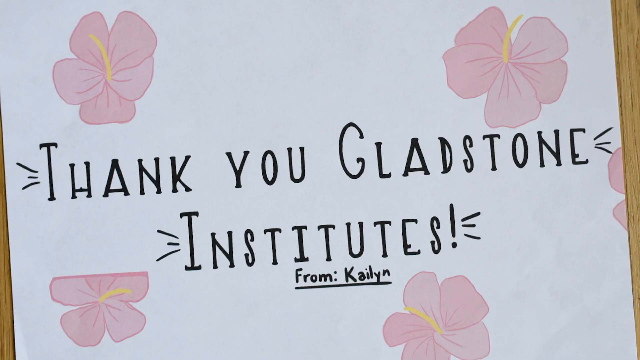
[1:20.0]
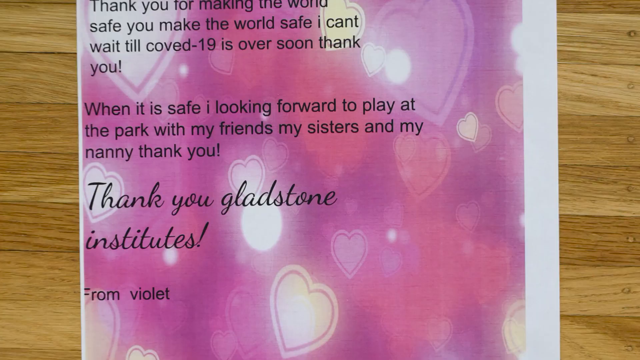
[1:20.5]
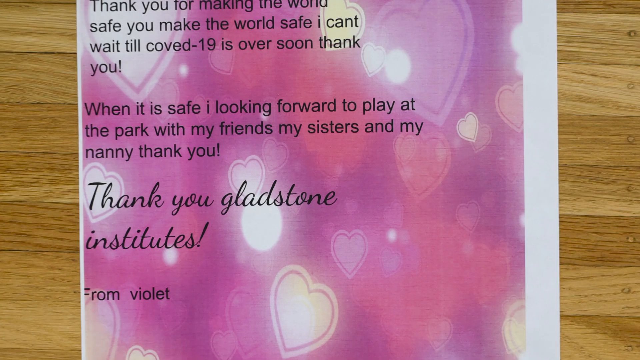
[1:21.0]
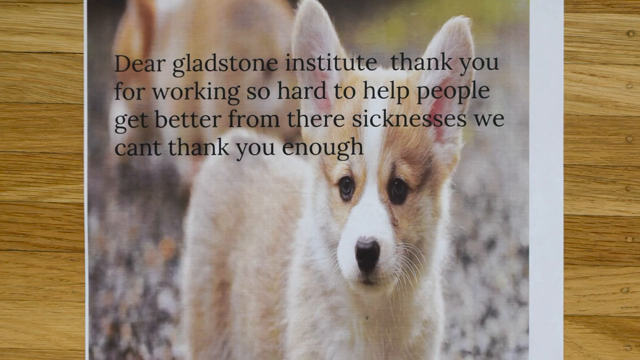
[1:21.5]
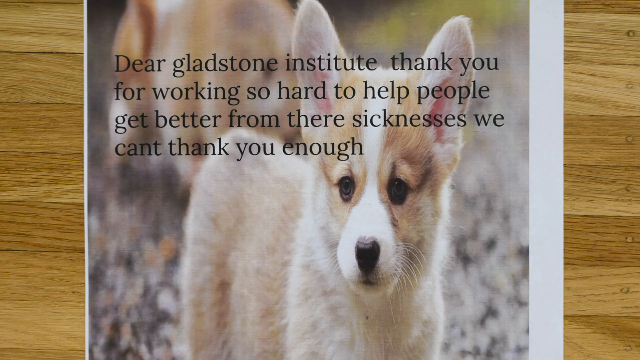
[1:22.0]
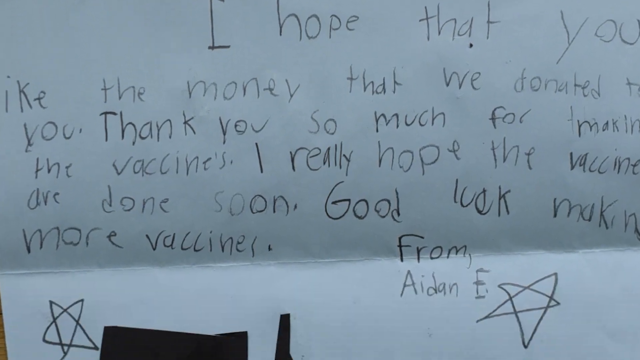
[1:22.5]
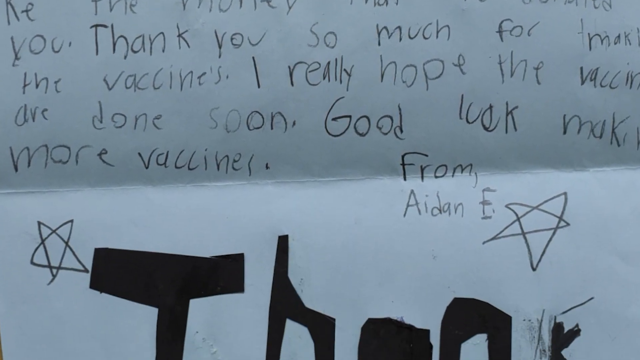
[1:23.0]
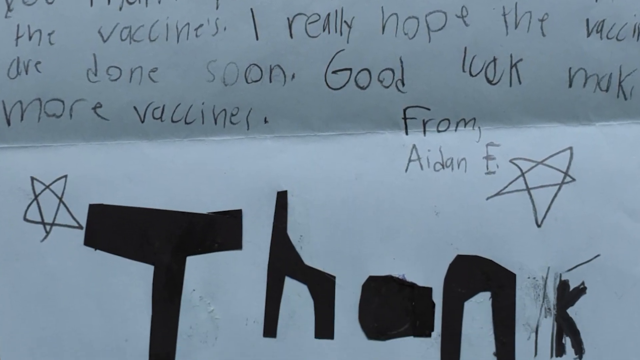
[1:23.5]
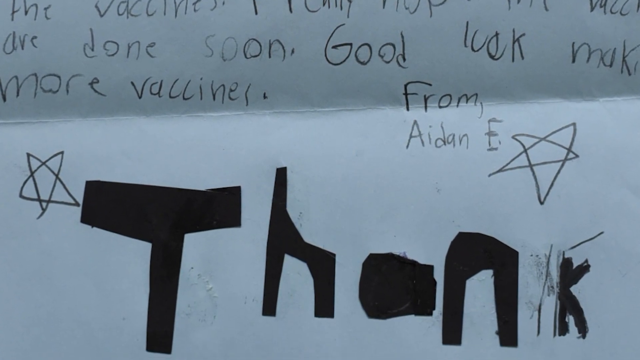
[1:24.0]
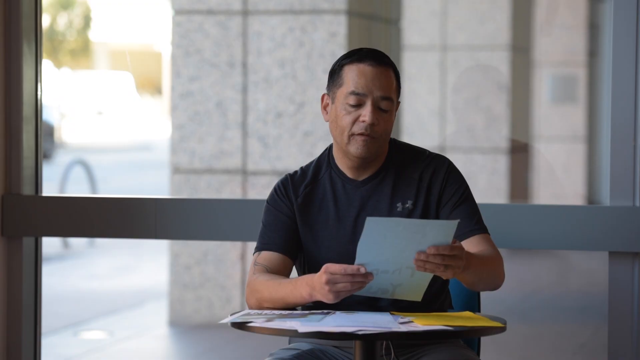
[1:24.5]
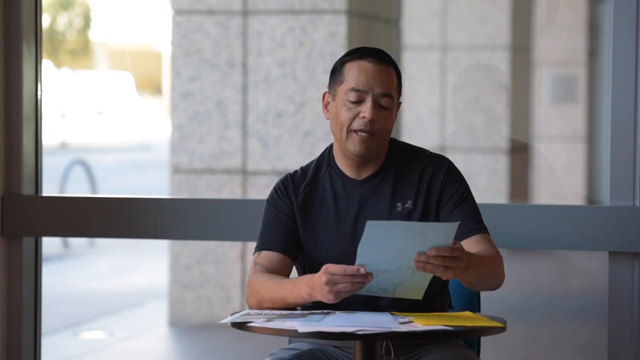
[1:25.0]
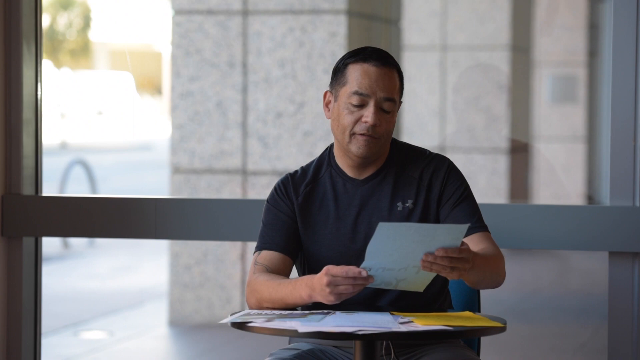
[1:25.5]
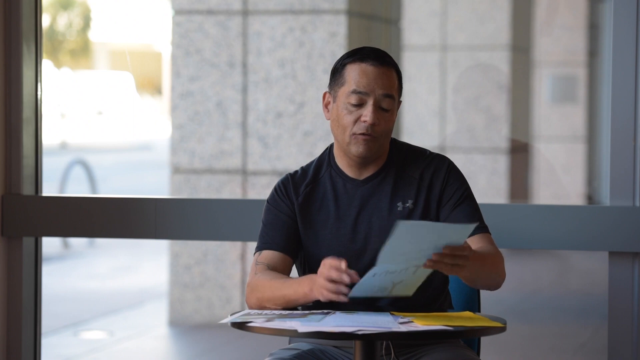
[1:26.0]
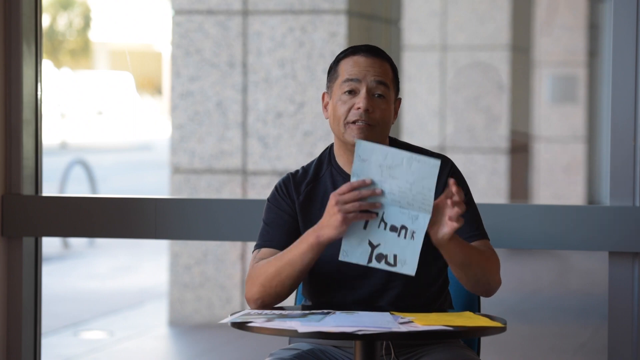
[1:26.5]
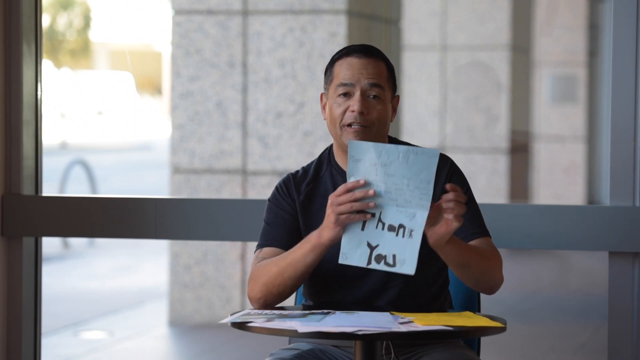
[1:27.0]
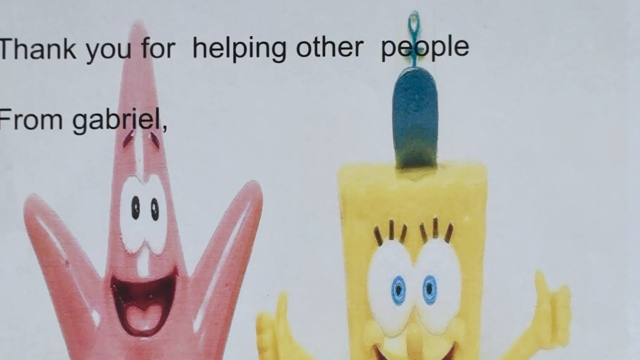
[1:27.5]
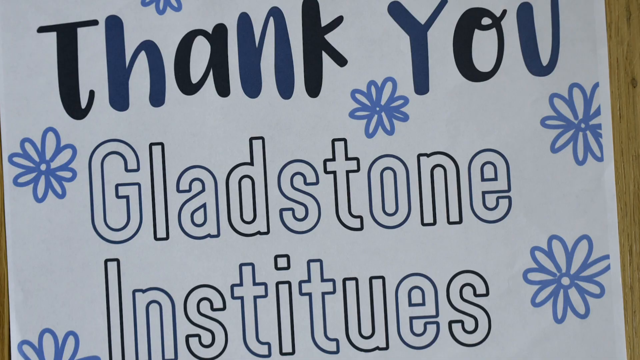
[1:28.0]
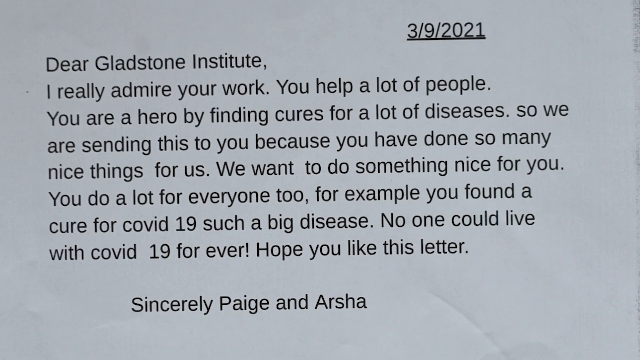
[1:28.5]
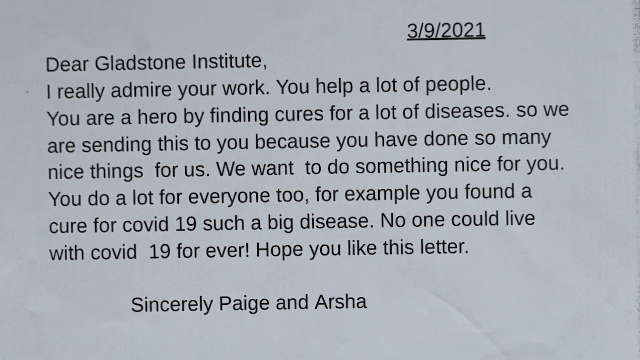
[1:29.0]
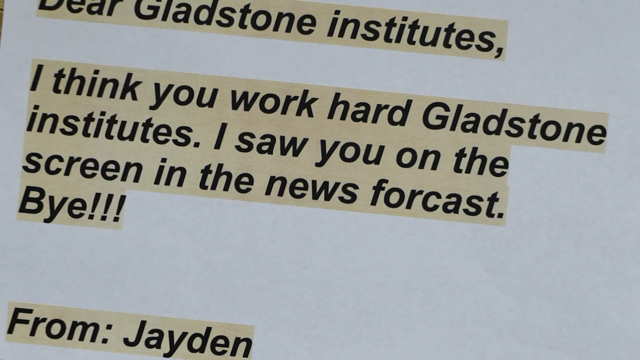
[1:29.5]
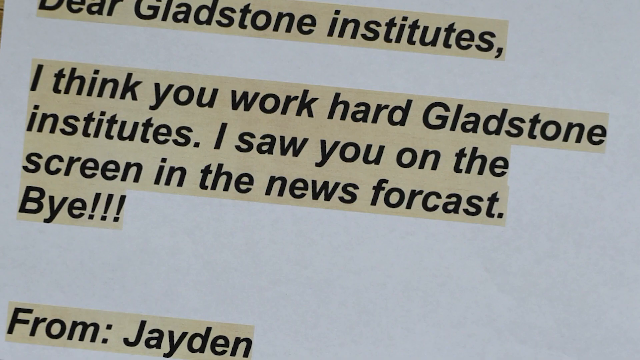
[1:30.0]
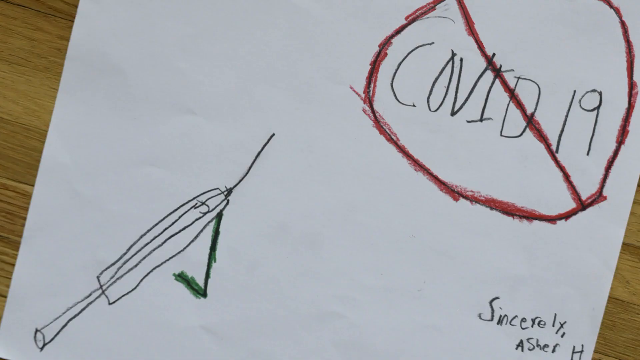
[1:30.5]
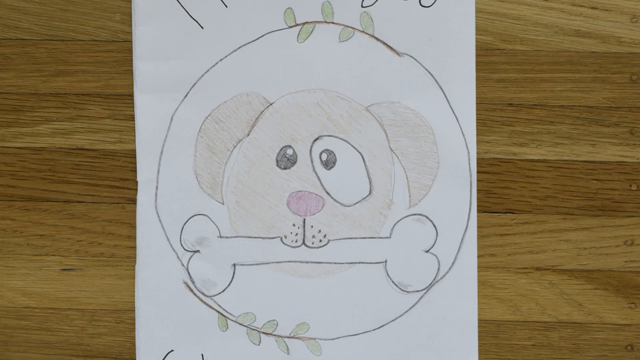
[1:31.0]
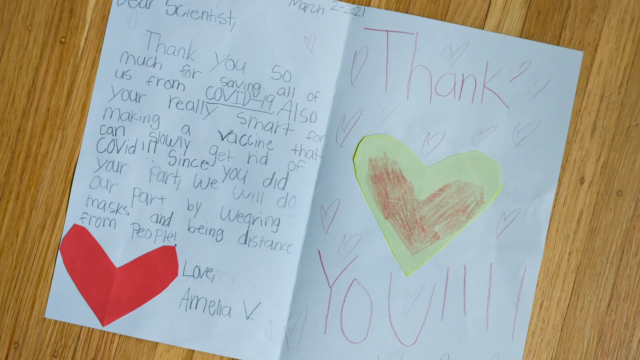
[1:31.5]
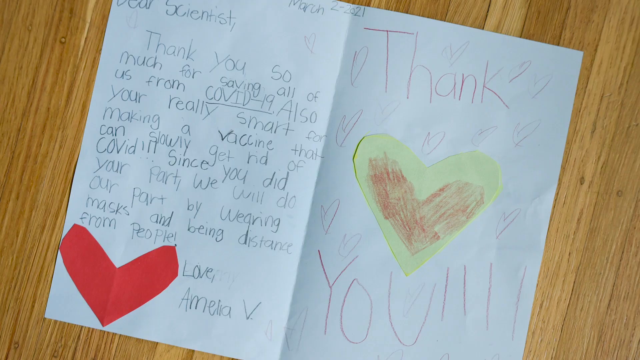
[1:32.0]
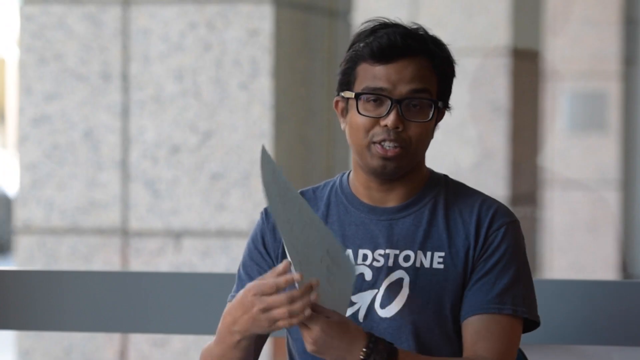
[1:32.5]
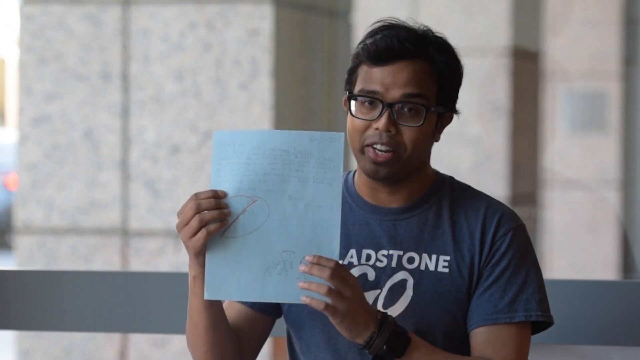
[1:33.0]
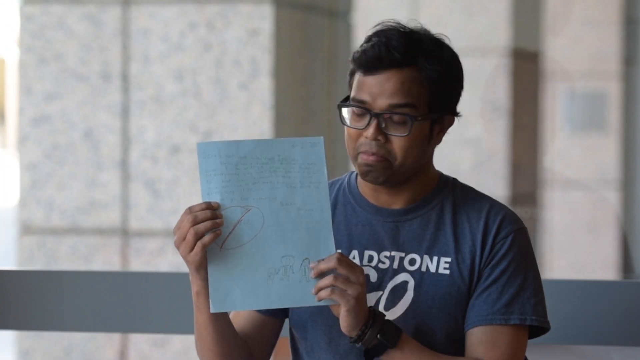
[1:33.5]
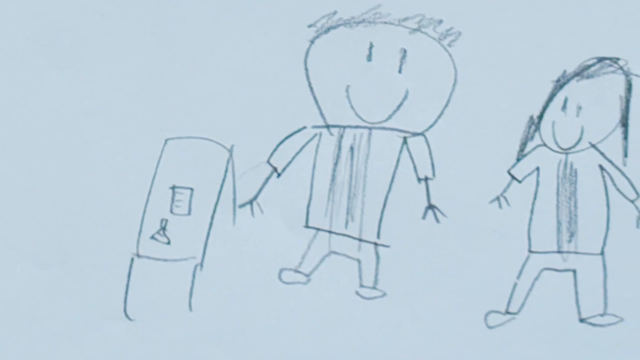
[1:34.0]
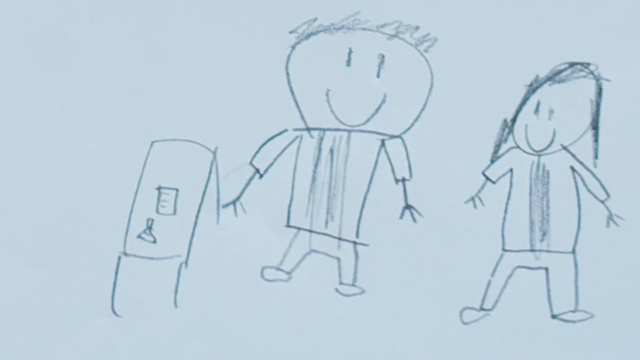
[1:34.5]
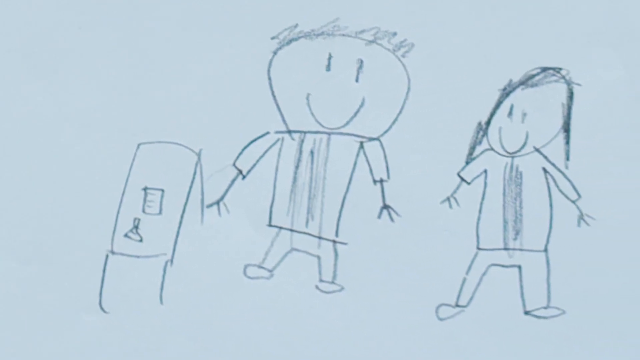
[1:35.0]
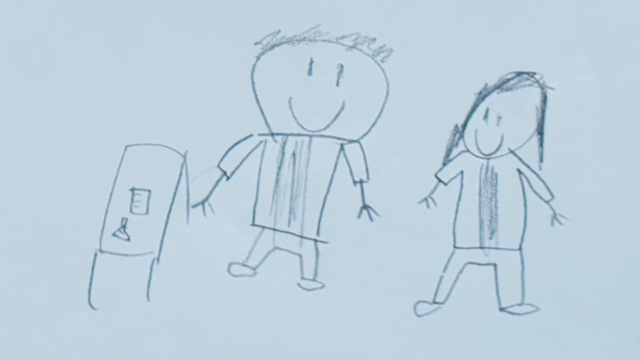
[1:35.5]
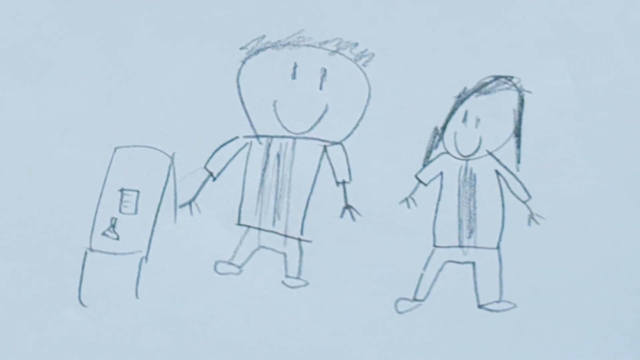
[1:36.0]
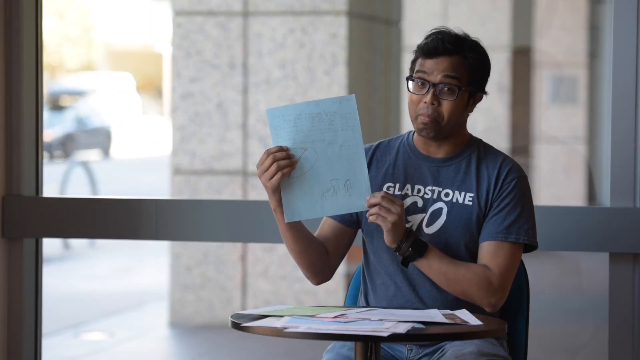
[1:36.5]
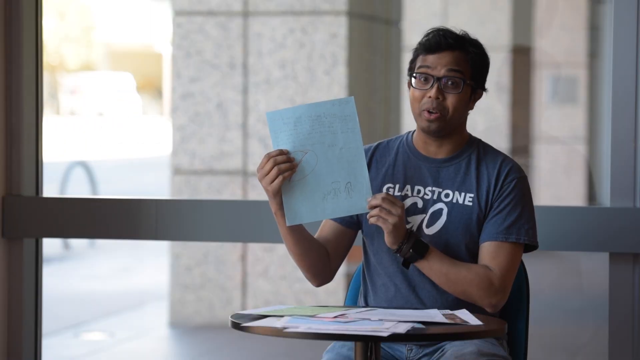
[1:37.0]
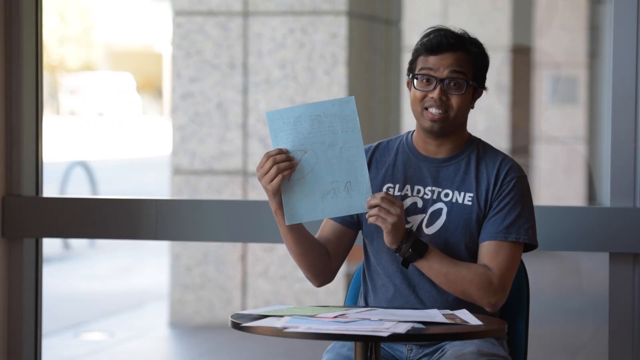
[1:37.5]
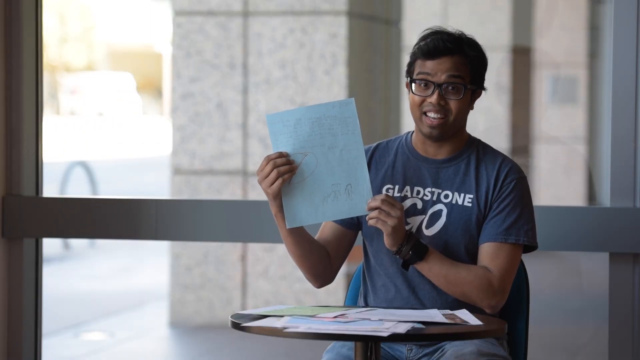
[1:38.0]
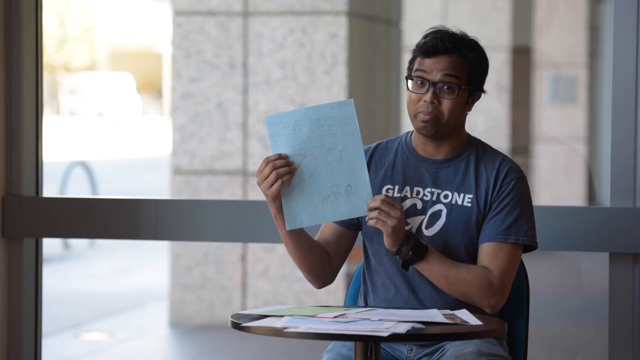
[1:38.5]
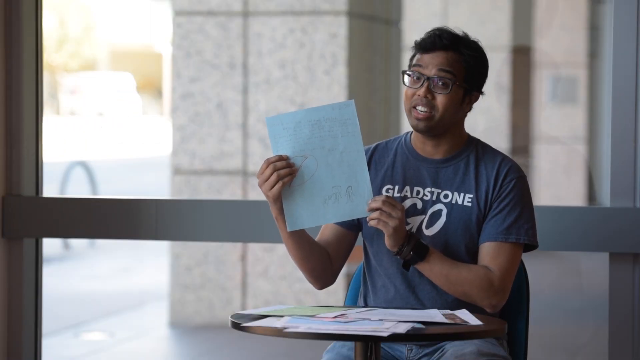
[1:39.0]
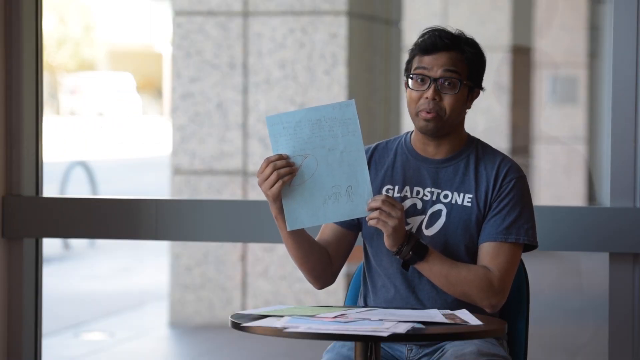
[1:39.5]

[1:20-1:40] A rectangular piece of paper has hand-drawn pink flowers and says "thank you, Gladstone Institutes from Caitlin"; the handwriting suggests she is young, maybe preteen. Another piece of paper, made on a computer, has purple hearts in the background and is another thank-you note to Gladstone Institutes, from Violet. Another shows a printed computer image of a dog and is another thank-you card to Gladstone. Next is a white card handwritten in pencil from Aiden, who is probably about seven or eight judging by the handwriting. The video then shows a seated man talking, wearing an Under Armour t-shirt, with a big open window behind him. He holds a card with both hands and is probably reading from it. He turns the card around, showing "thank you" written in marker, and continues talking.